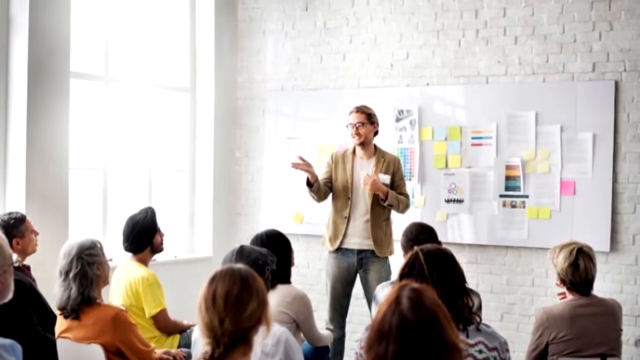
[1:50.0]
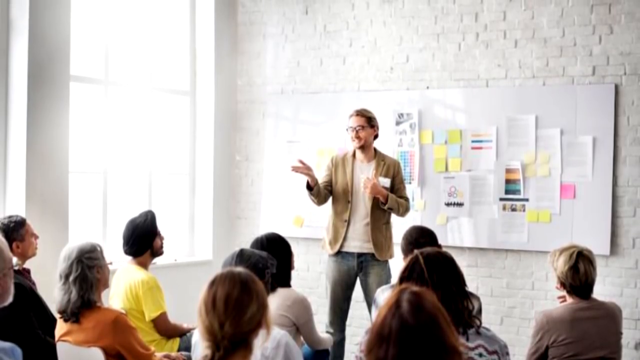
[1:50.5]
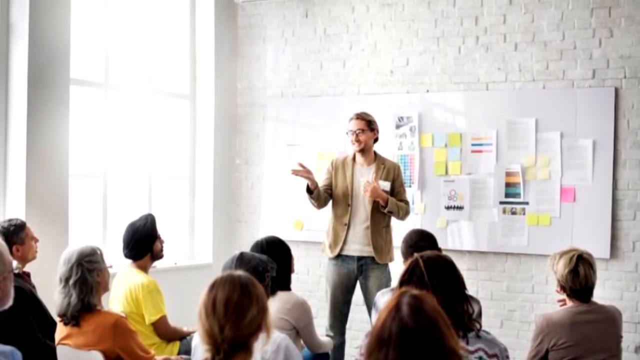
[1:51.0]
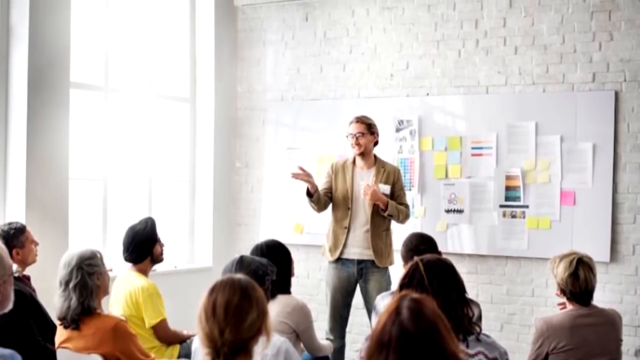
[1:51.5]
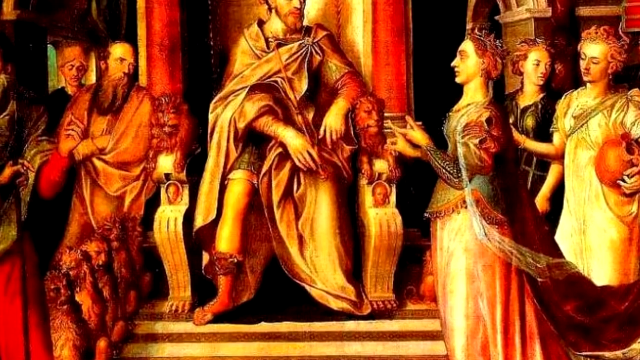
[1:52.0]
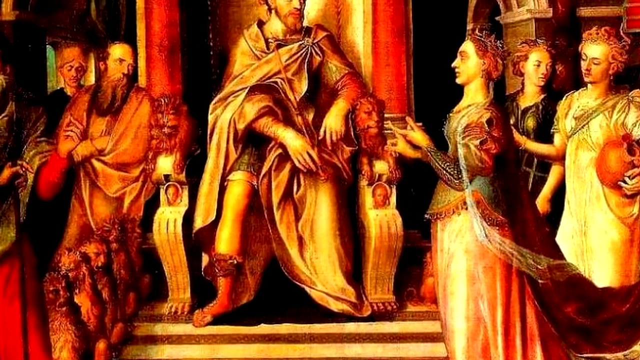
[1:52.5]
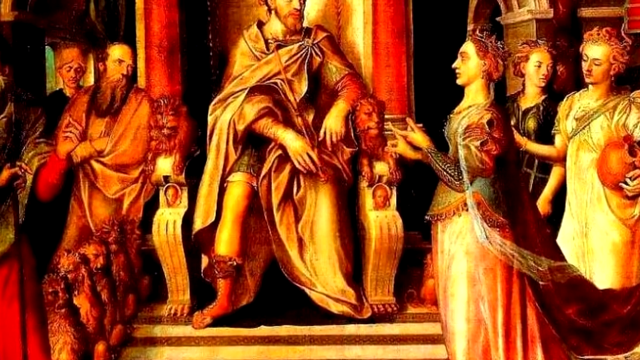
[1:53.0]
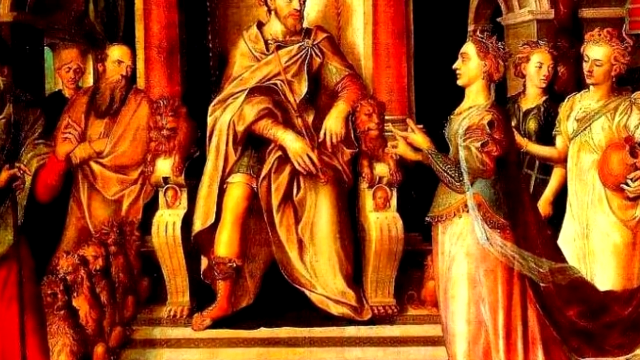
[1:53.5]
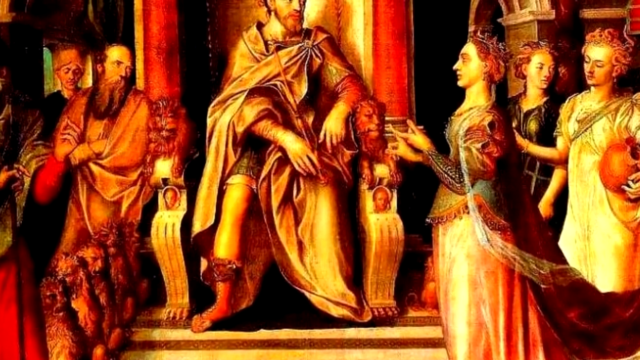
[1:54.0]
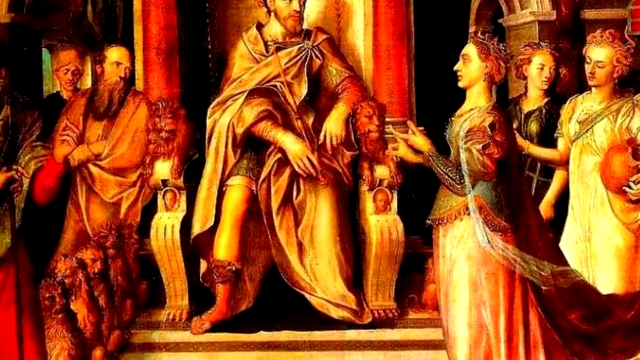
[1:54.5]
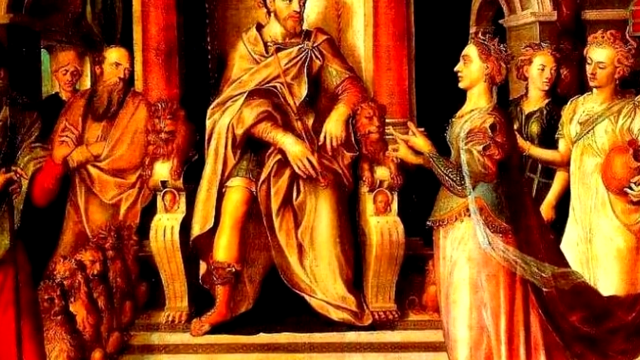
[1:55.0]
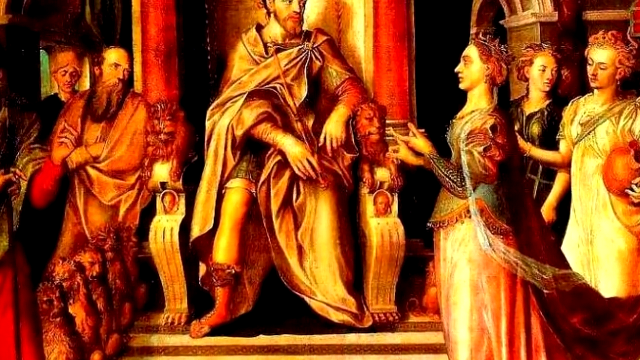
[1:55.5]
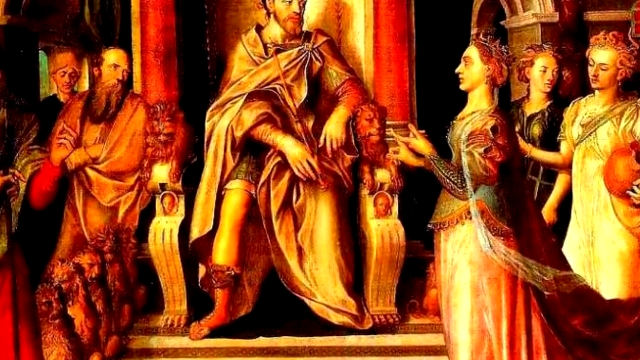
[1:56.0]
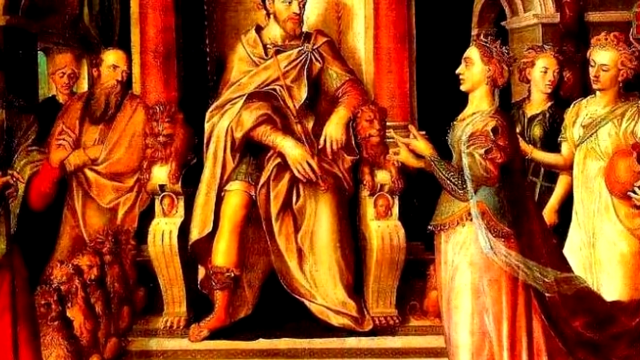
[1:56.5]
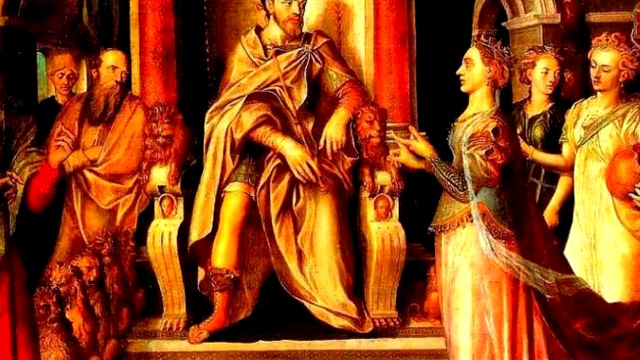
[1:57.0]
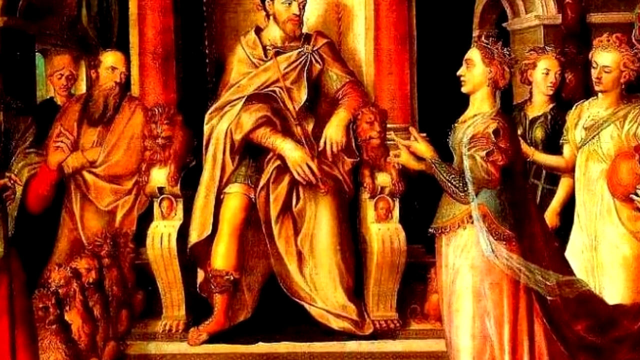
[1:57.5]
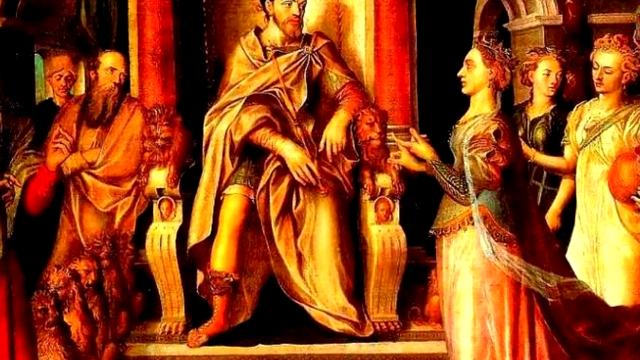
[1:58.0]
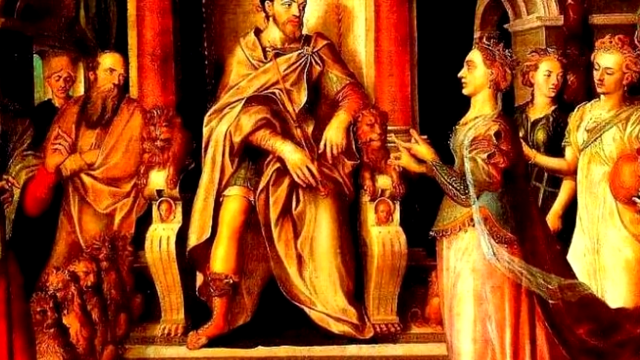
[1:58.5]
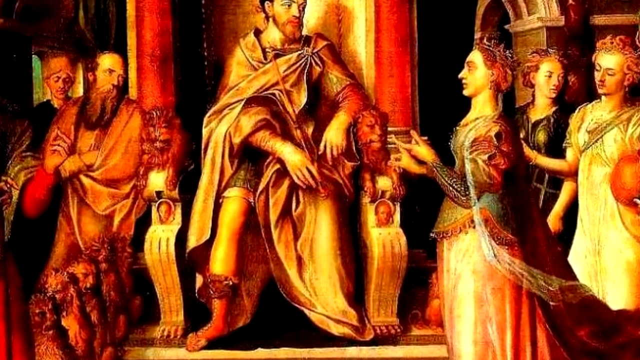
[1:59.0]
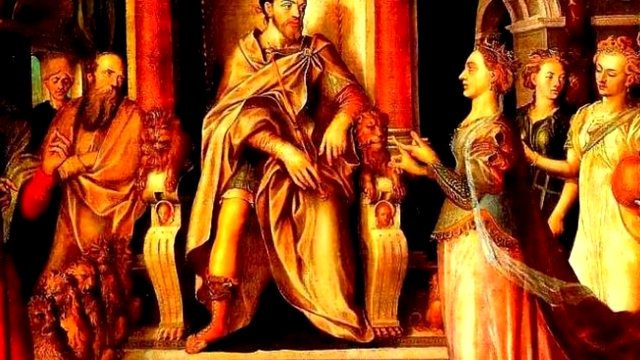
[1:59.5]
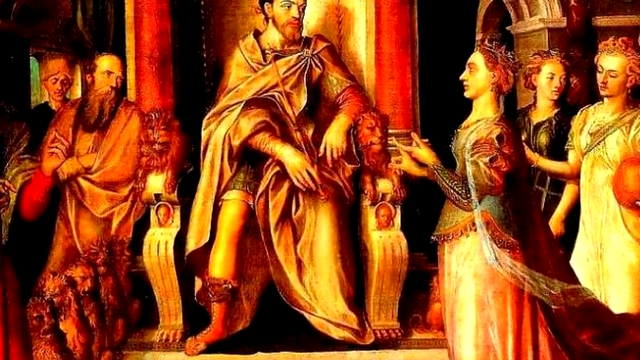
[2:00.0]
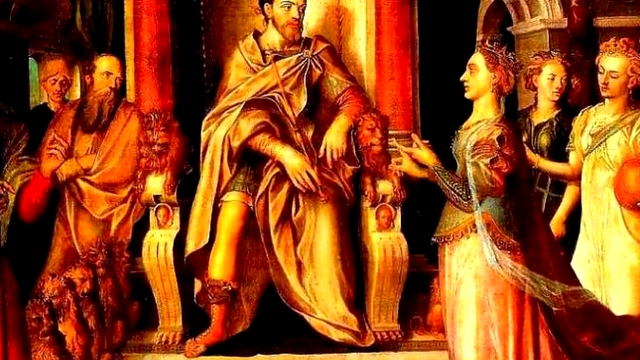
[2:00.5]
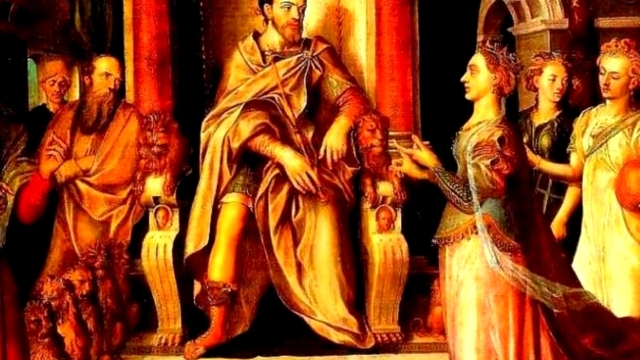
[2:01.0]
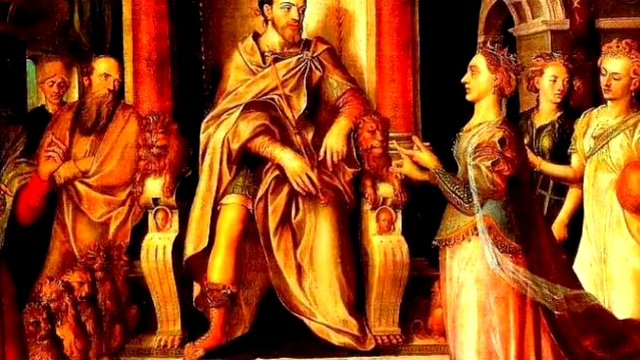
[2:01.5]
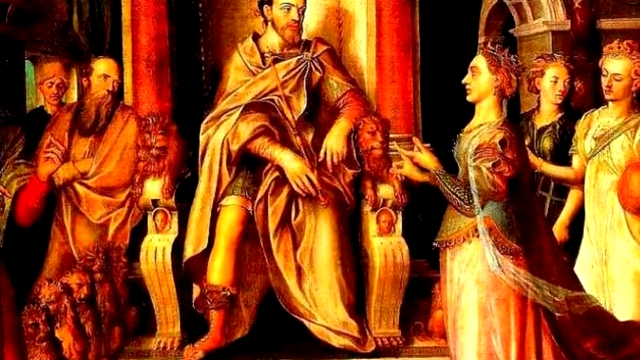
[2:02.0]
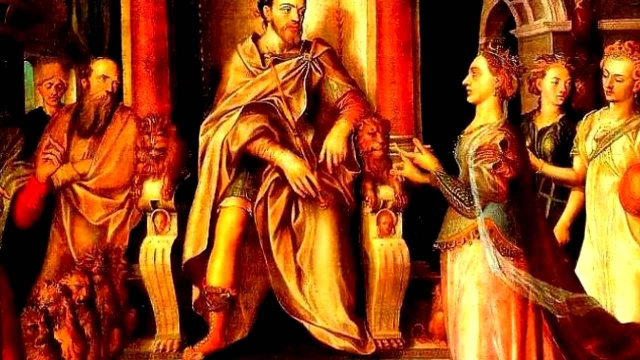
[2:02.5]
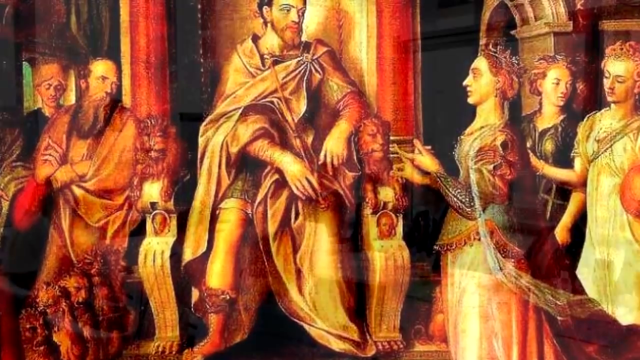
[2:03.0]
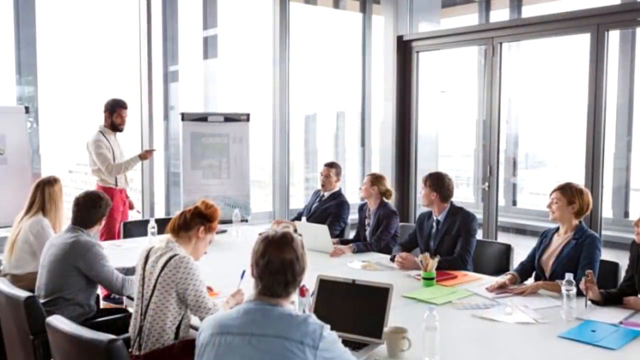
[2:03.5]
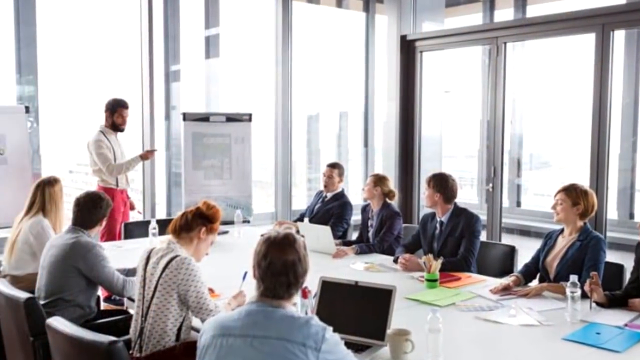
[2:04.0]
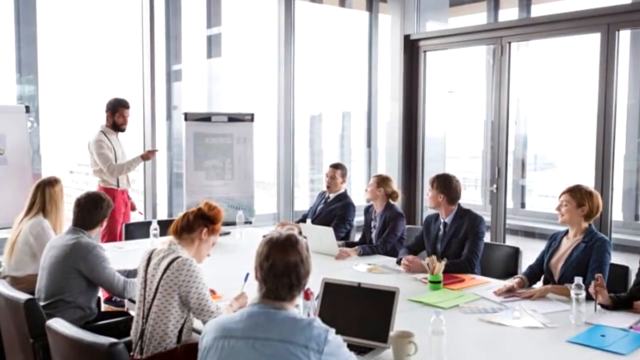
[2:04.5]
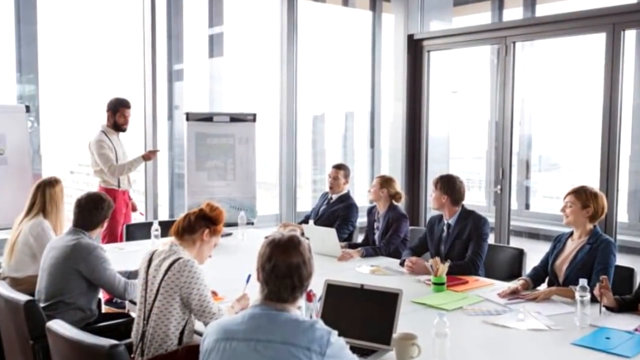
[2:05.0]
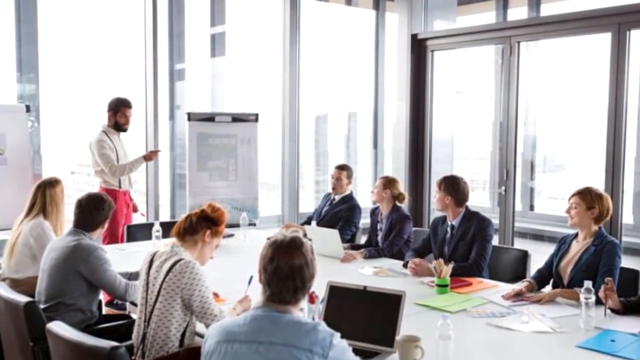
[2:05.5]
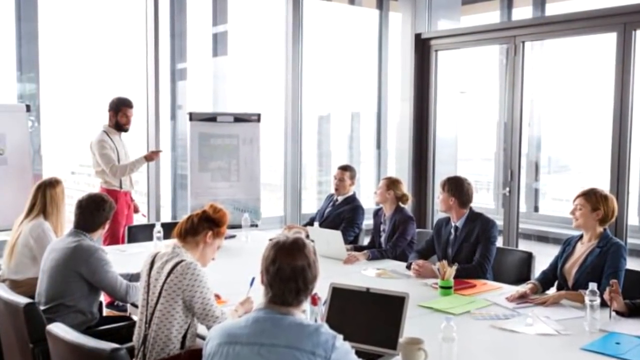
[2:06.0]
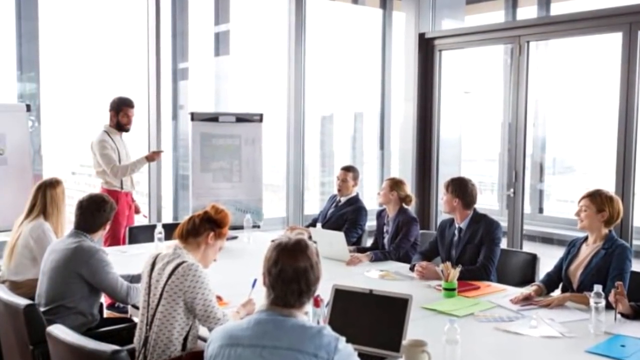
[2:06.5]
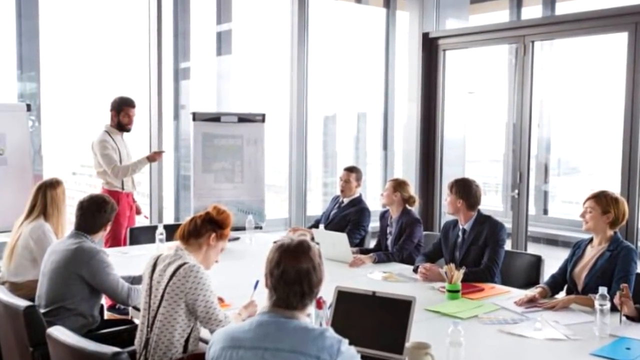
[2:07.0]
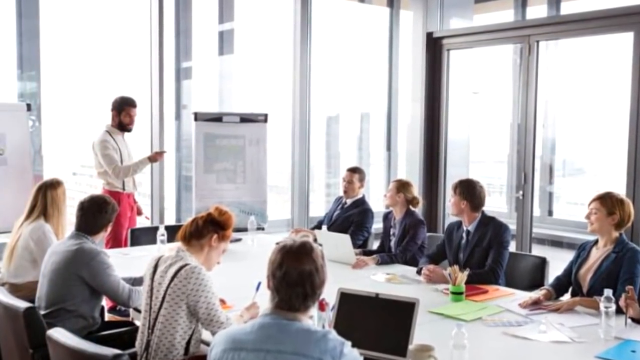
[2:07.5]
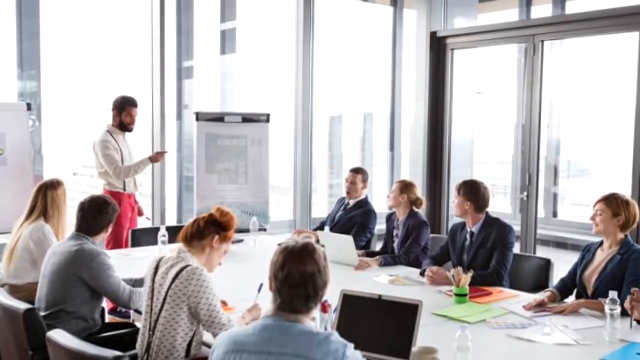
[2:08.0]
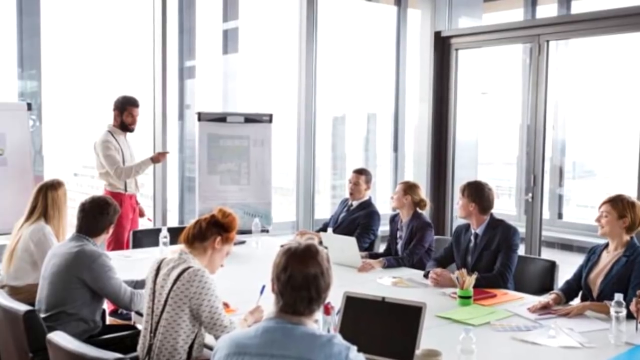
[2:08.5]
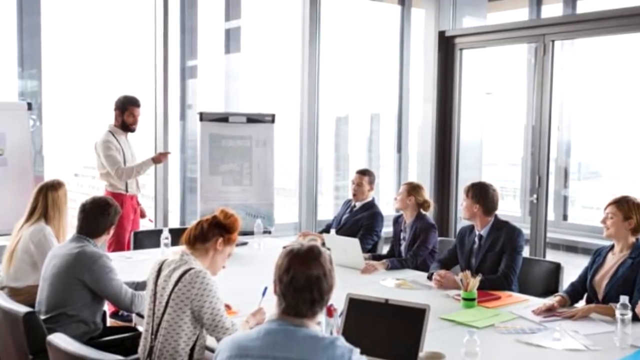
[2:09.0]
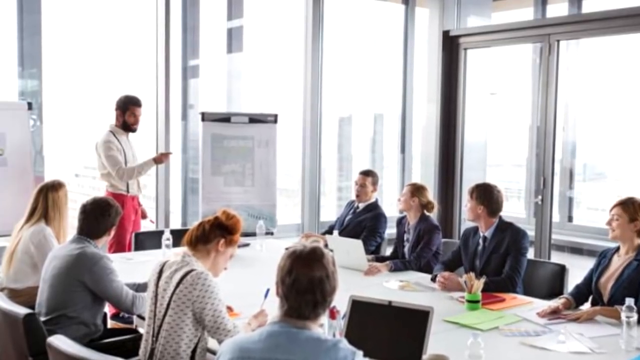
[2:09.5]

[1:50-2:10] A brick wall painted white has a whiteboard on it with a bunch of papers taped to it. A man stands in front of it like a teacher, wearing jeans, a sweater and a shirt, and glasses. A bunch of people sit listening to him; they all look like adults, no desks are visible, and only the people's heads can be seen. The video then goes to another painting, showing a man on a throne with someone talking to him, apparently a woman, while other people kind of stand off to the side watching. The whole painting is very gold and red. Another office scene follows in a room completely surrounded by windows, with a really big table. A man at the front gives a presentation while a bunch of people sit on either side of the table watching him; one half of the table is wearing suits and jackets, and the other half seems to be wearing collared shirts.